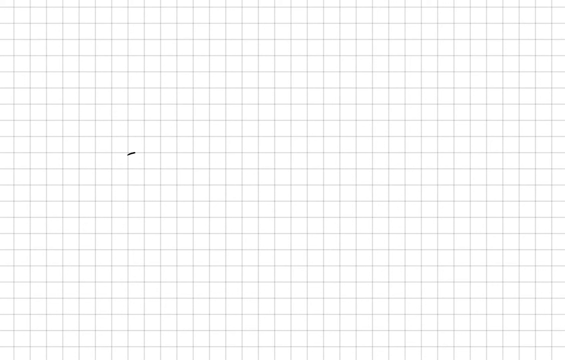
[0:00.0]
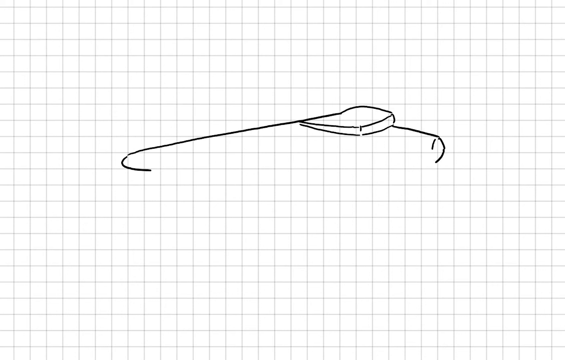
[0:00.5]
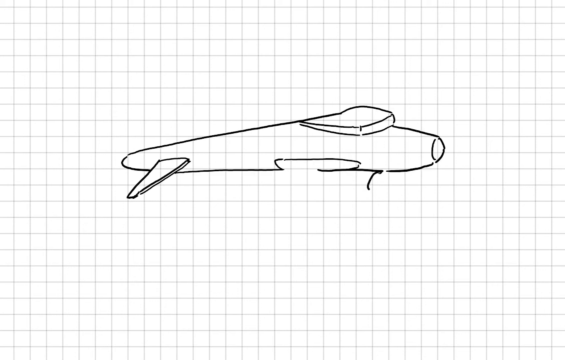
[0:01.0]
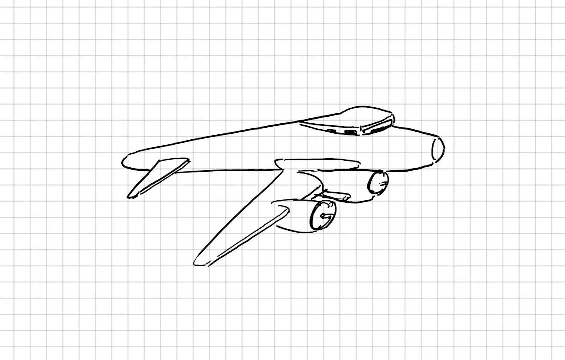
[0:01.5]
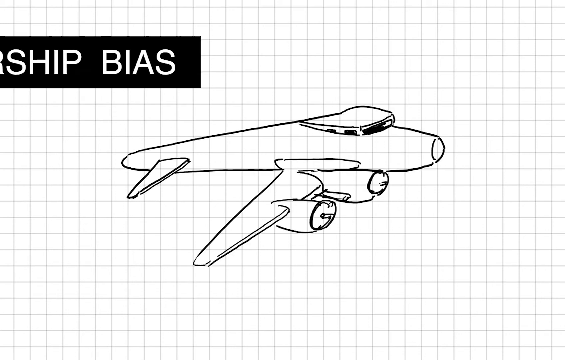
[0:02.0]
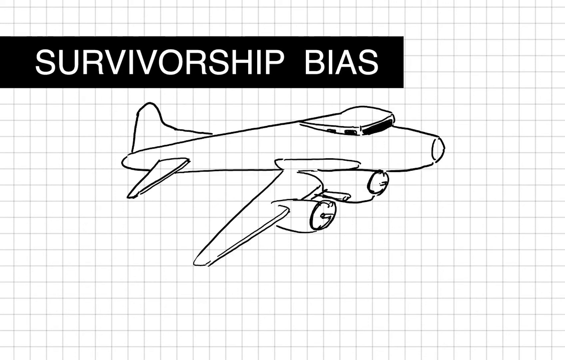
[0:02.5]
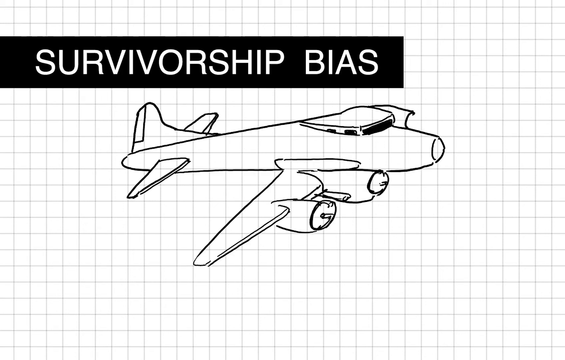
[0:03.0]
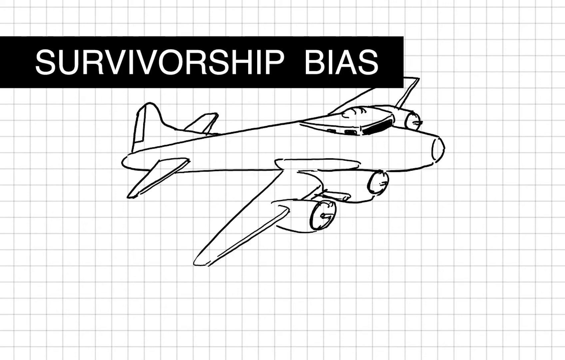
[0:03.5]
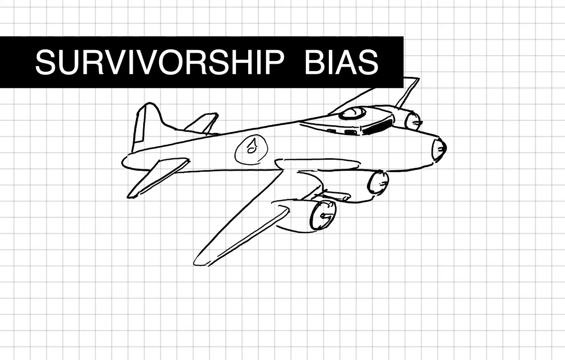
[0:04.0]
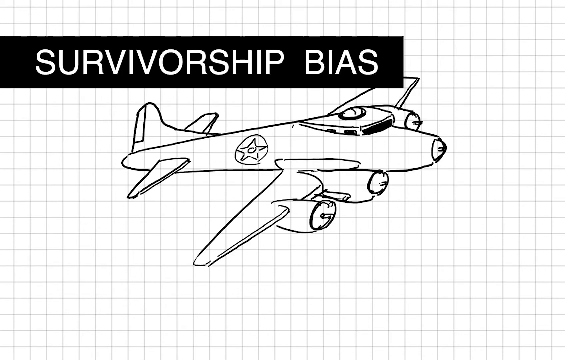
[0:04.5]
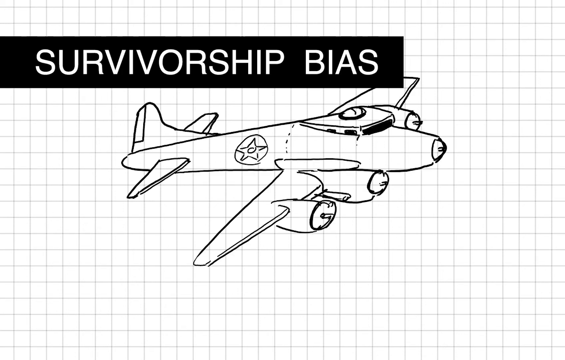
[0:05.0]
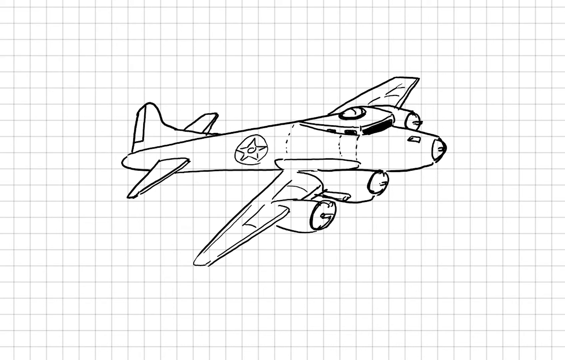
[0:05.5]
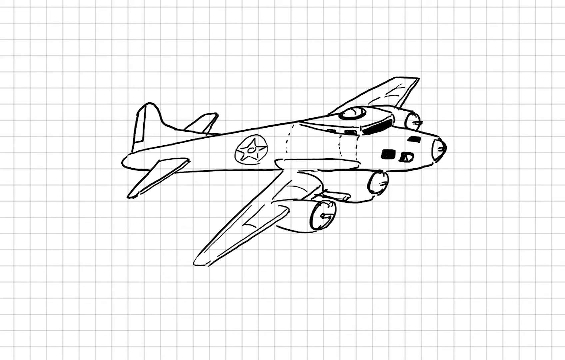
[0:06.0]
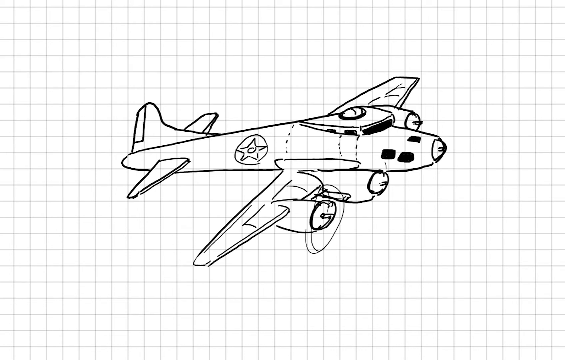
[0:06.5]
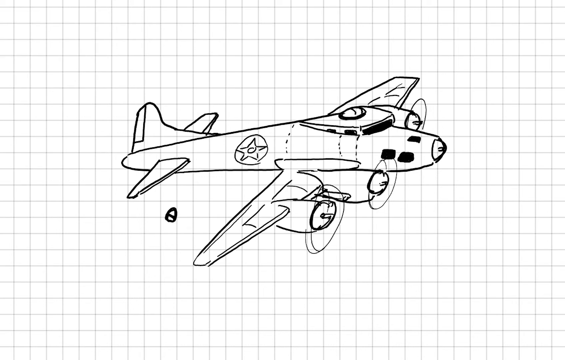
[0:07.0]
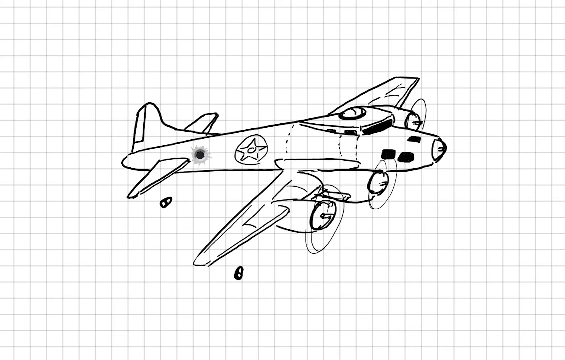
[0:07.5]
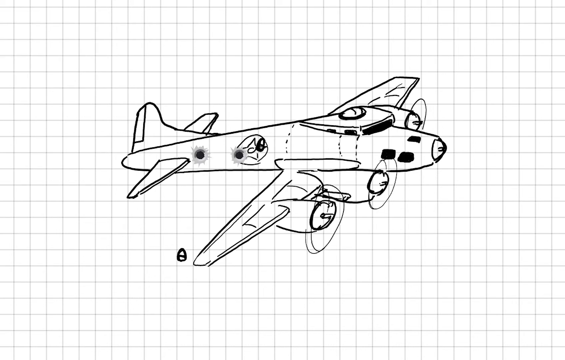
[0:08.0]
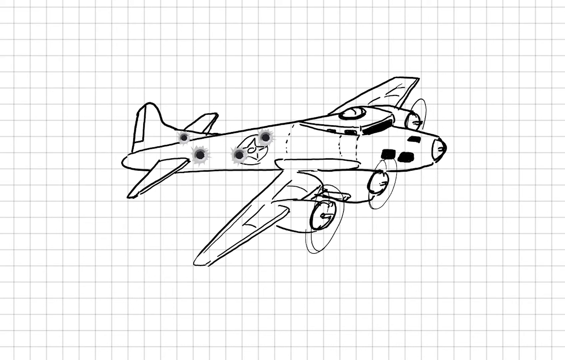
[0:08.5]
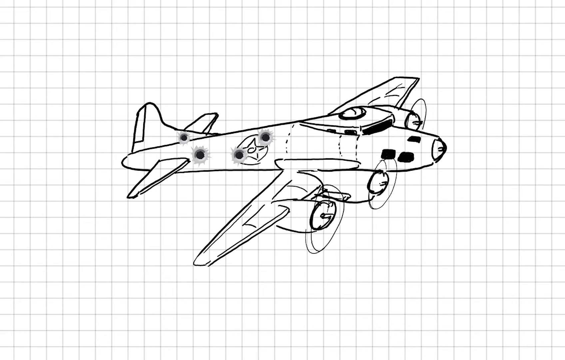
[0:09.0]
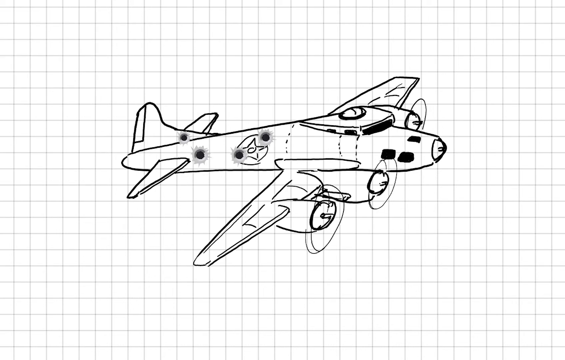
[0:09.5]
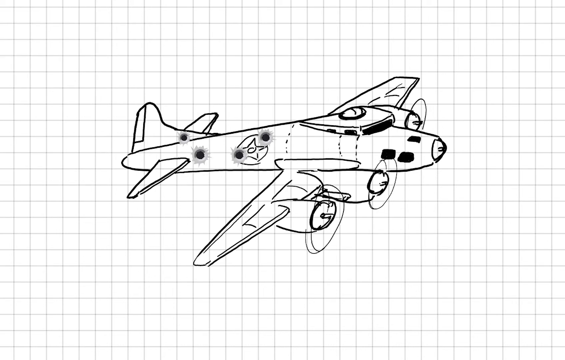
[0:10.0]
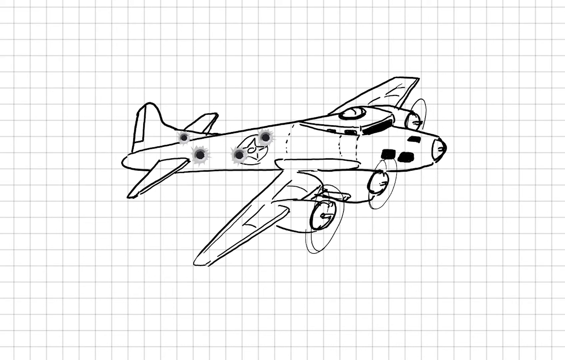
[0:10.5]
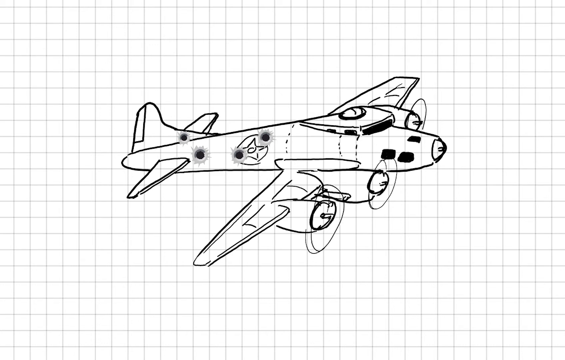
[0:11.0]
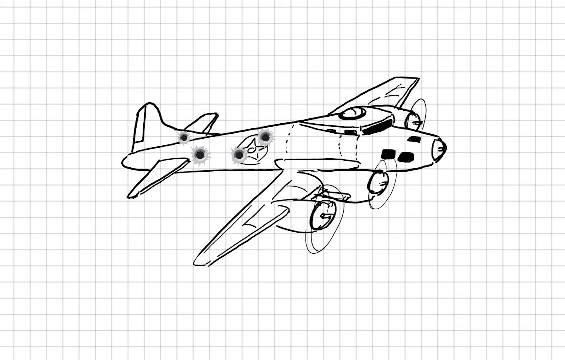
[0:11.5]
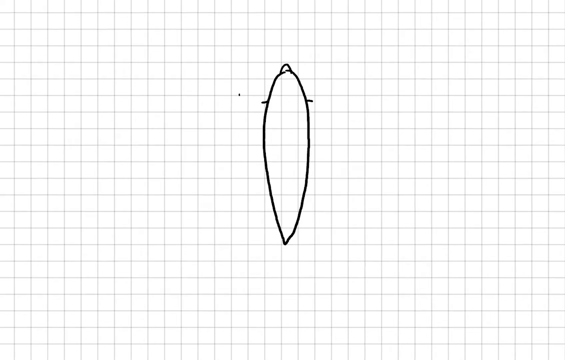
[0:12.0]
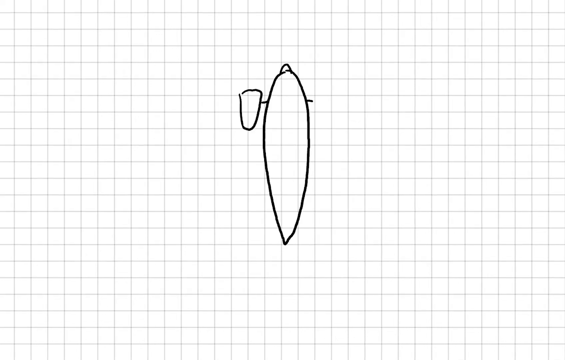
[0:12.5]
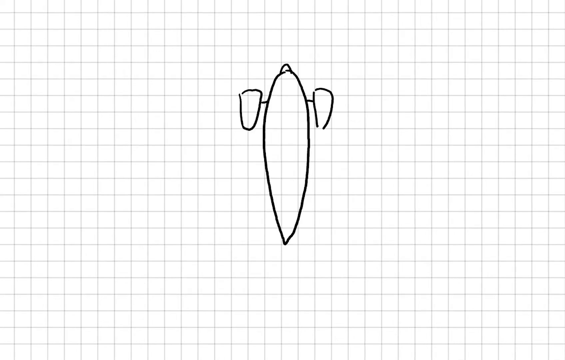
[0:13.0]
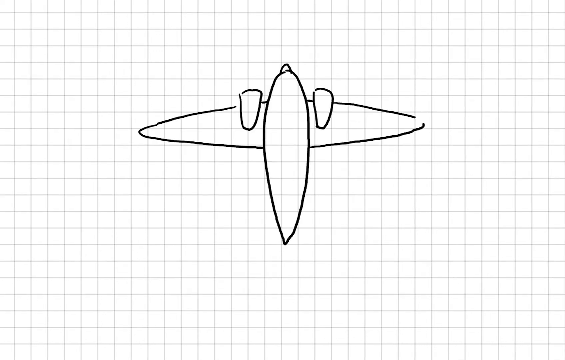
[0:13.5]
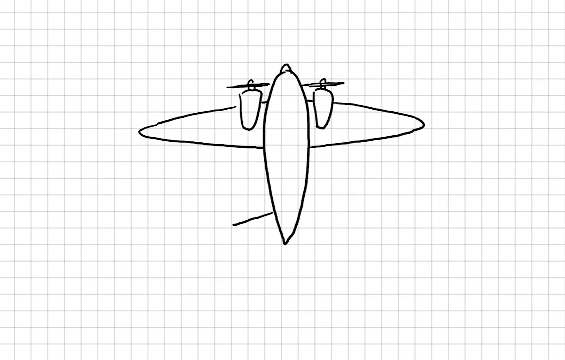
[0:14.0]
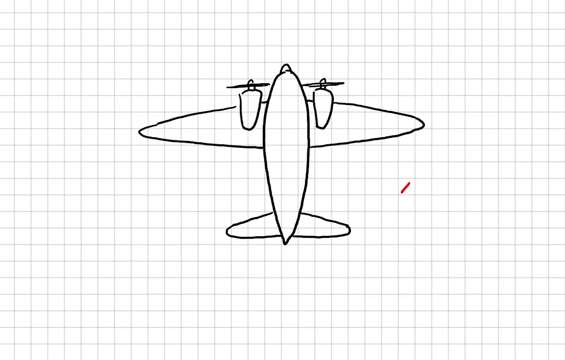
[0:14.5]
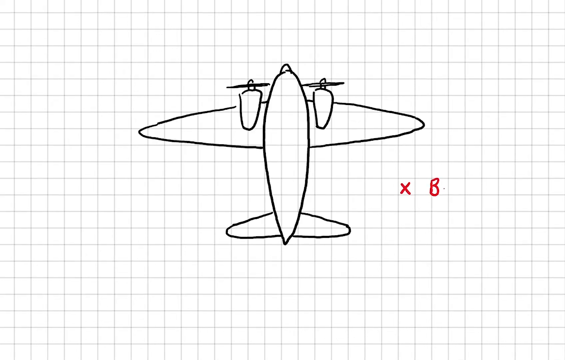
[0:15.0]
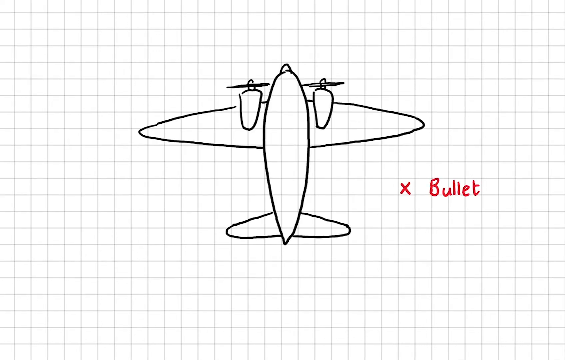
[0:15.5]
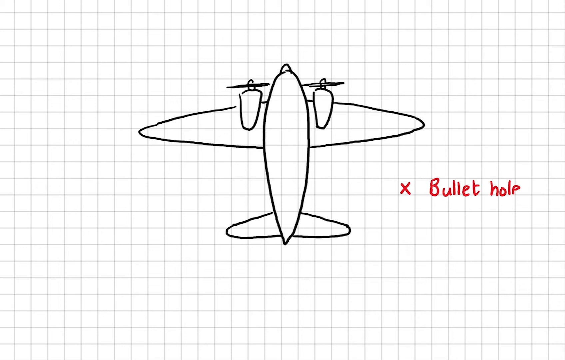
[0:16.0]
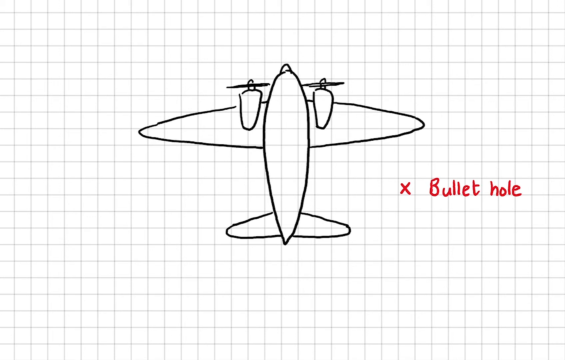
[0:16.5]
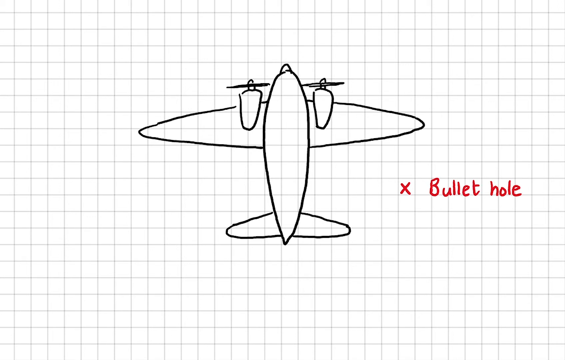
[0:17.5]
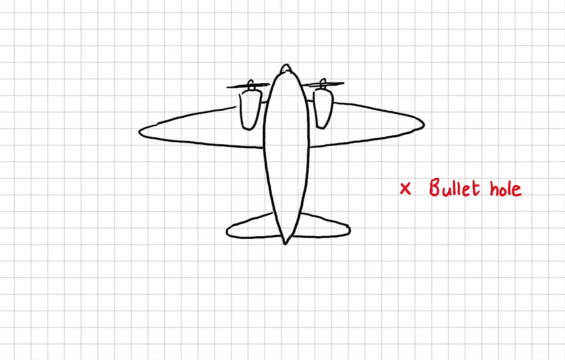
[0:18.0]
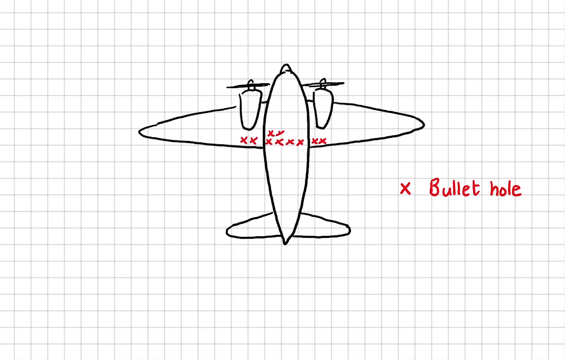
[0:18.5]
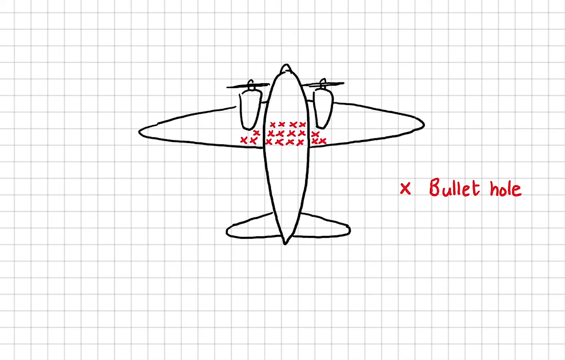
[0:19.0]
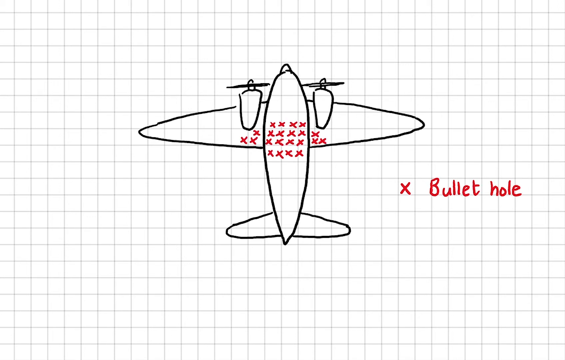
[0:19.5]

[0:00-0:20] A white background with a black grid appears, and what looks like a sketch begins to be drawn. It becomes a sketch of what looks like an airplane: the person completes it by adding the two wings and the back, then adds what looks like a symbol of the country it belongs to, and then adds more details to the plane. What looks like an effect of gunshots hitting the plane follows, with four gunshots at the back of the plane. The view then changes to a top view of the plane, with text on the right-hand side referring to a bullet hole. He then draws multiple red x's on the plane to represent the bullet holes.